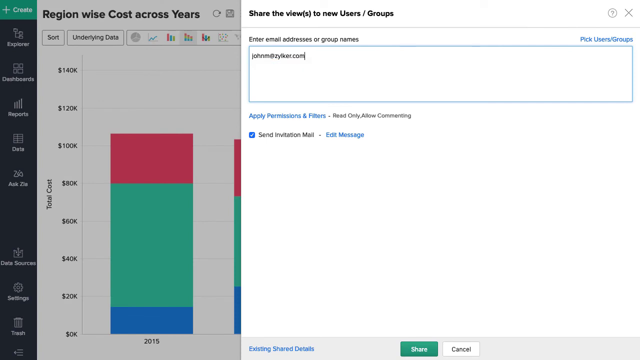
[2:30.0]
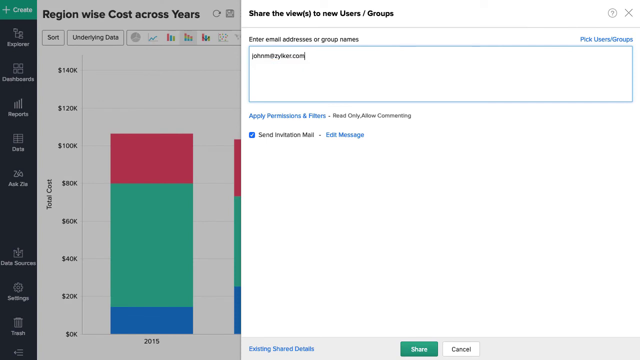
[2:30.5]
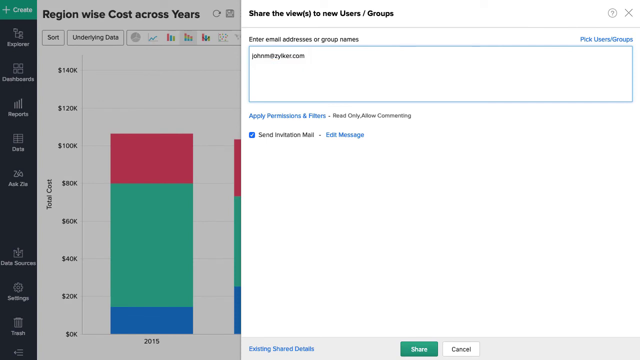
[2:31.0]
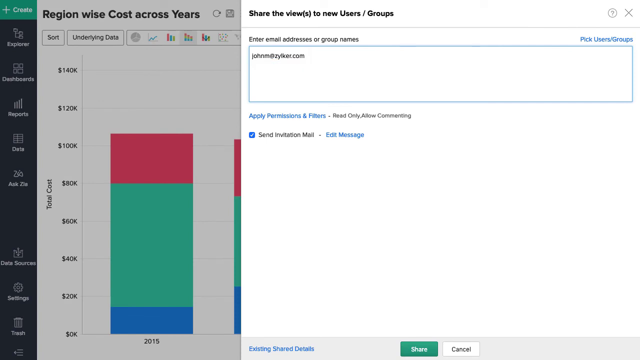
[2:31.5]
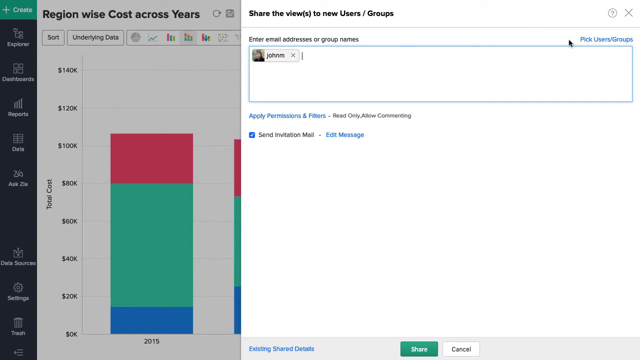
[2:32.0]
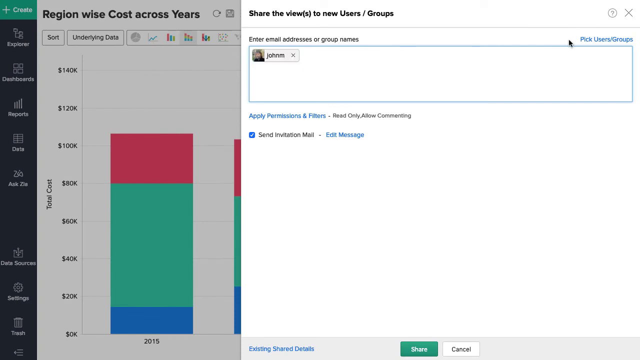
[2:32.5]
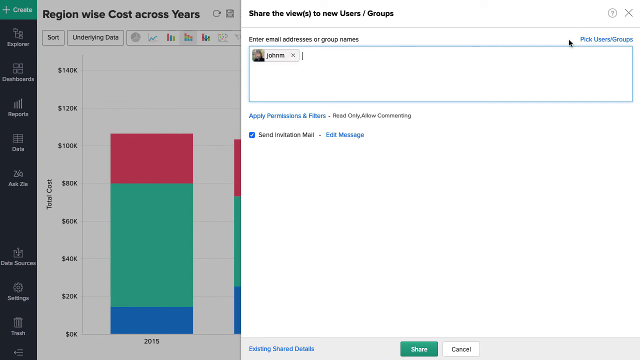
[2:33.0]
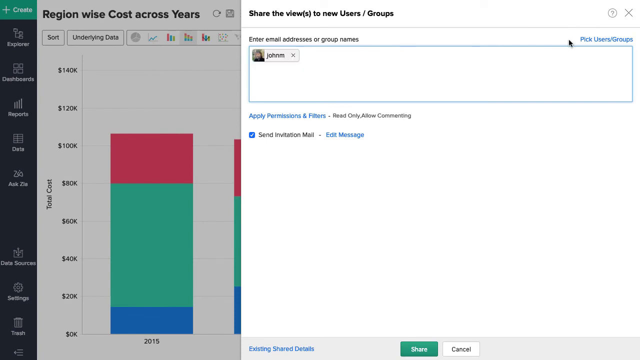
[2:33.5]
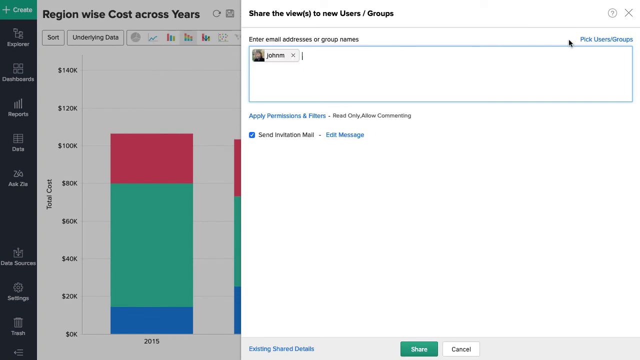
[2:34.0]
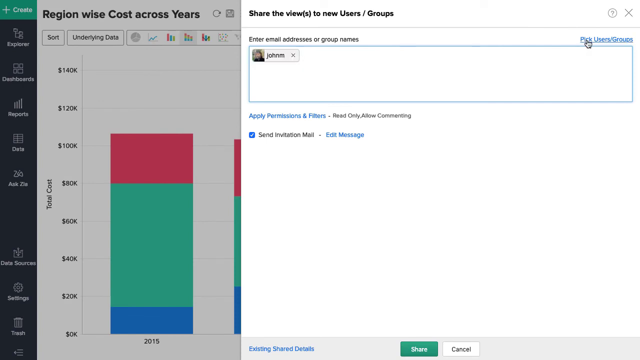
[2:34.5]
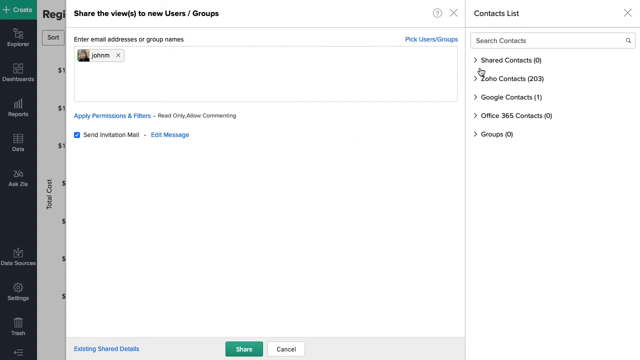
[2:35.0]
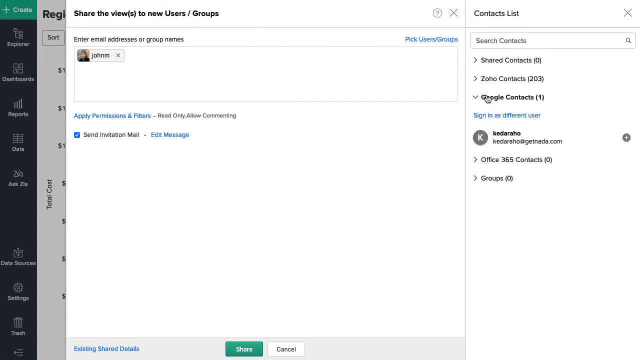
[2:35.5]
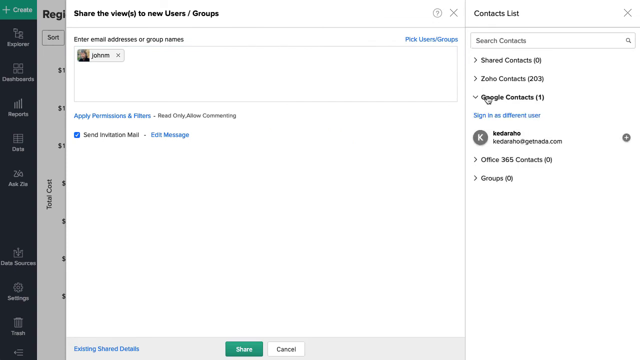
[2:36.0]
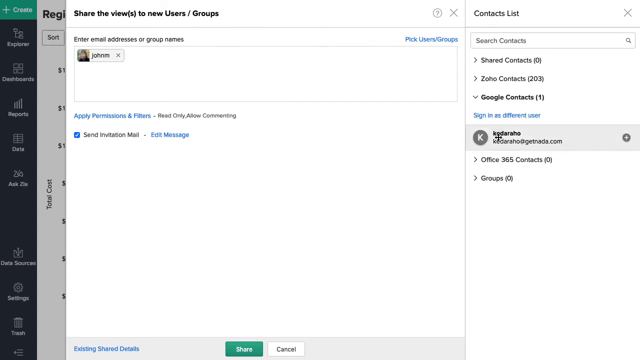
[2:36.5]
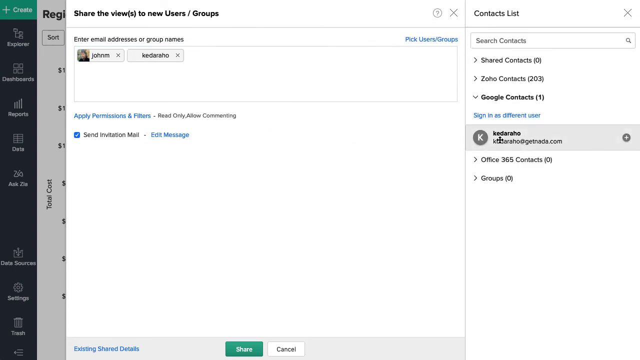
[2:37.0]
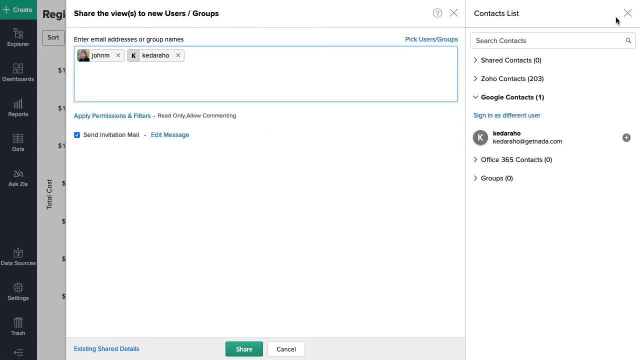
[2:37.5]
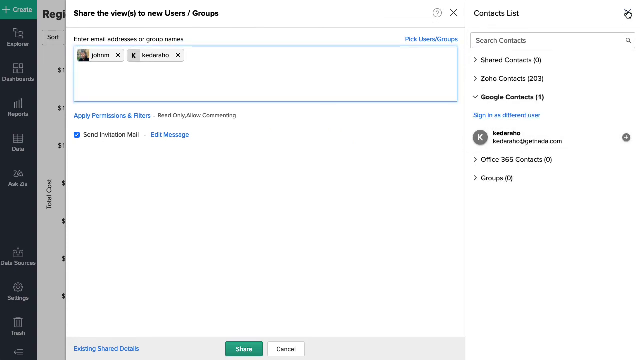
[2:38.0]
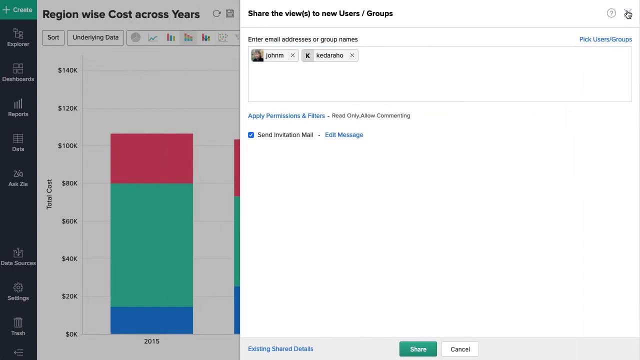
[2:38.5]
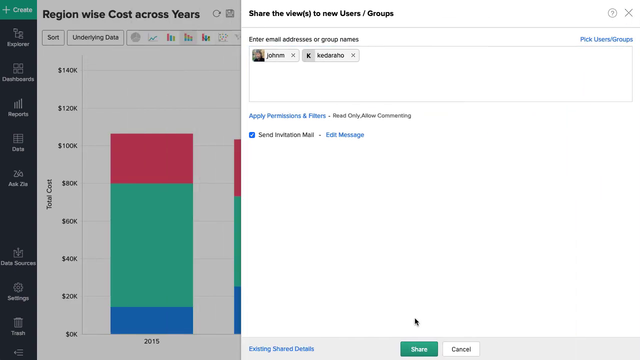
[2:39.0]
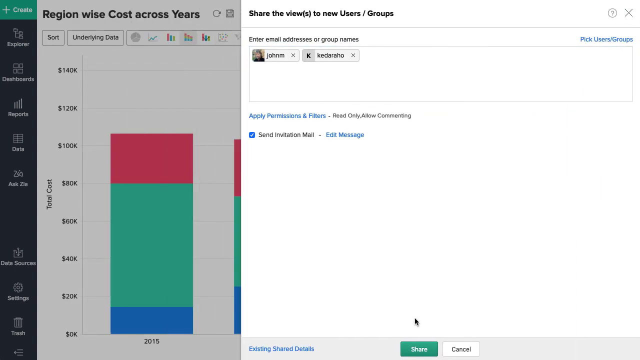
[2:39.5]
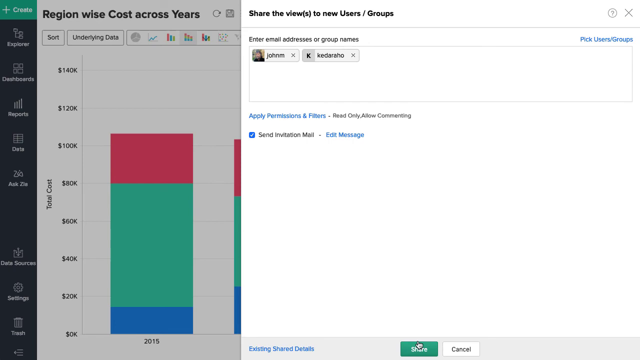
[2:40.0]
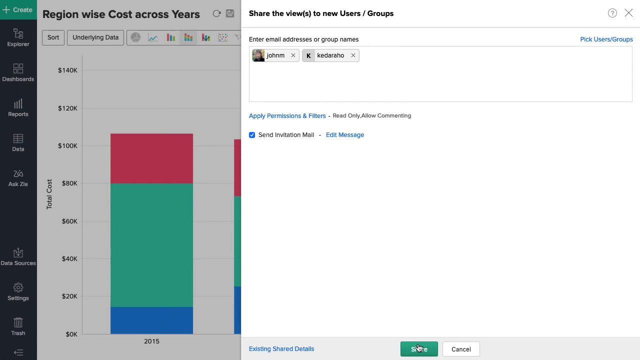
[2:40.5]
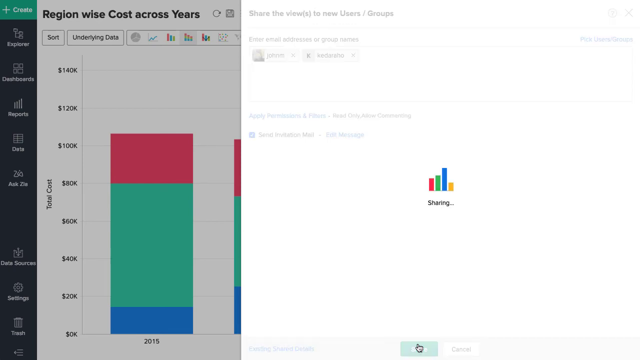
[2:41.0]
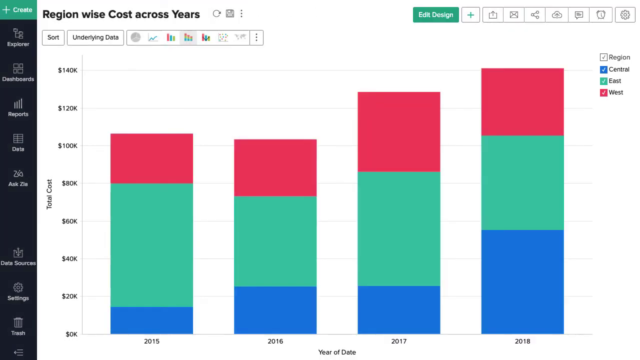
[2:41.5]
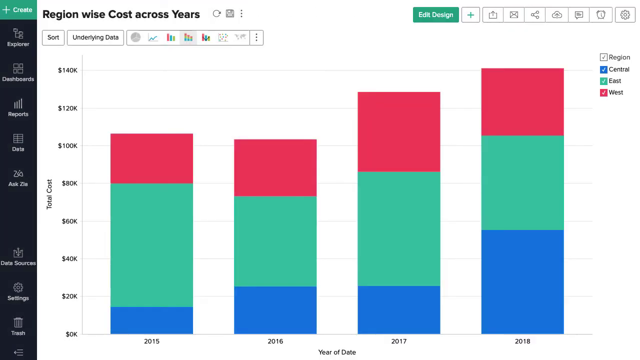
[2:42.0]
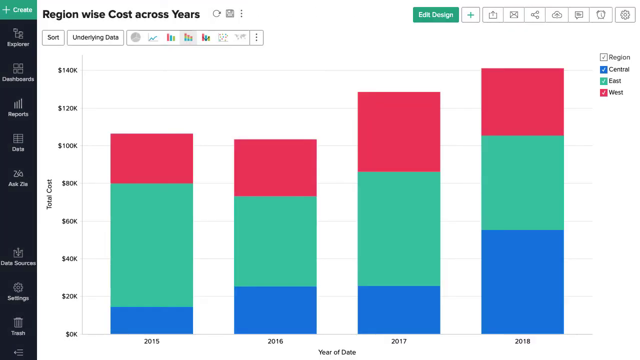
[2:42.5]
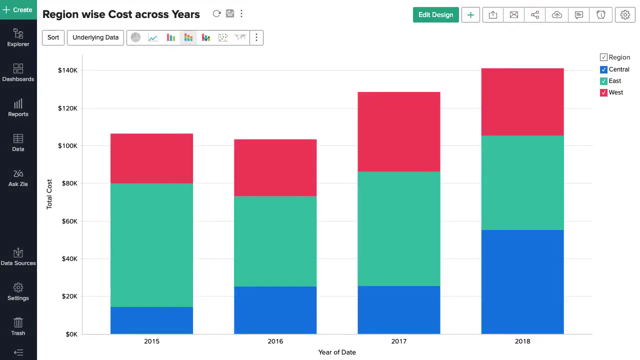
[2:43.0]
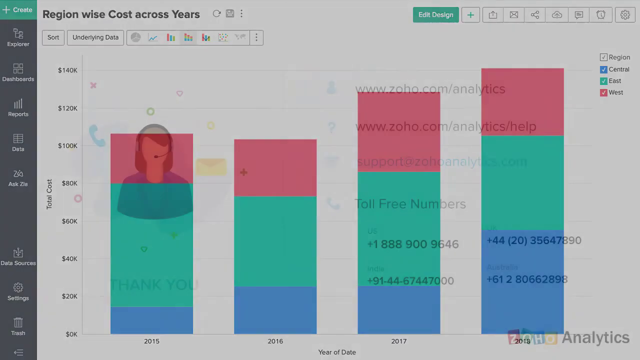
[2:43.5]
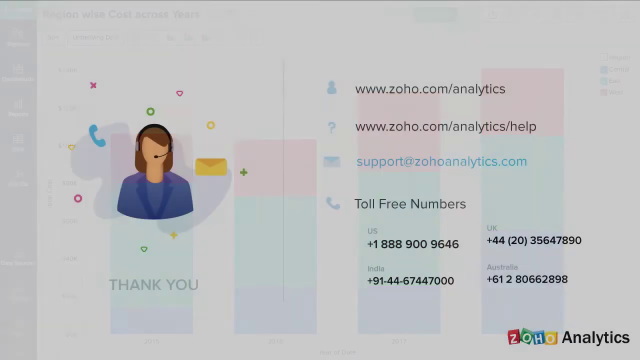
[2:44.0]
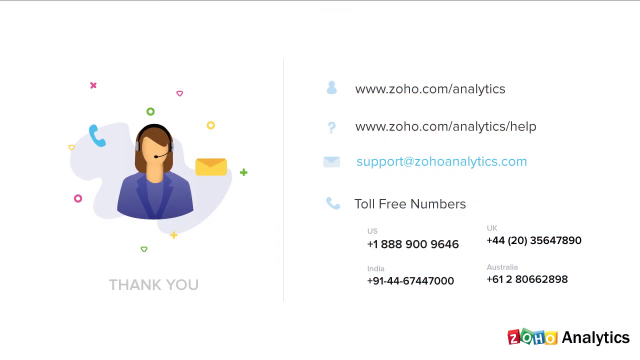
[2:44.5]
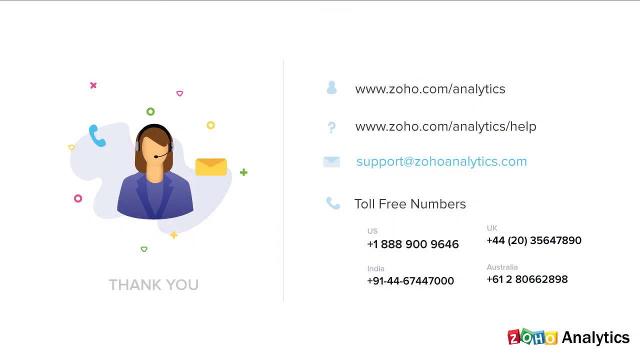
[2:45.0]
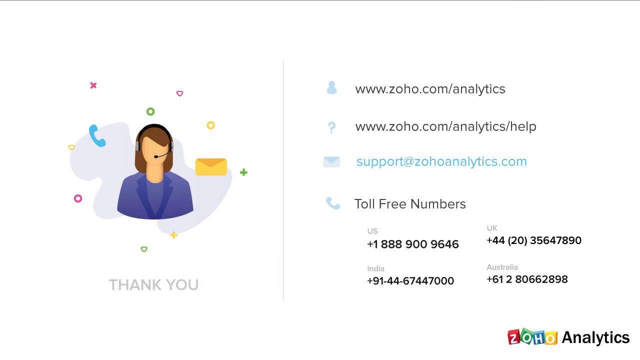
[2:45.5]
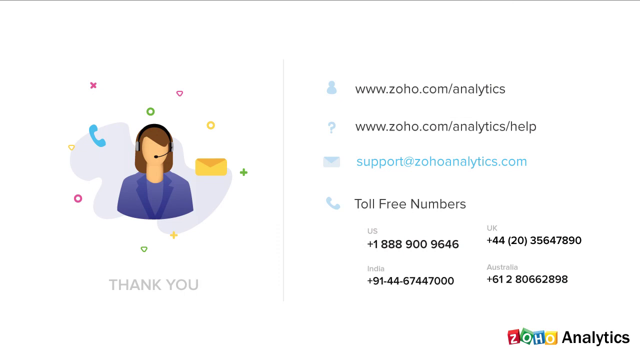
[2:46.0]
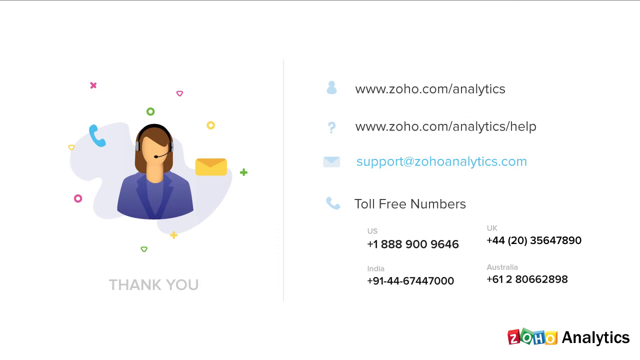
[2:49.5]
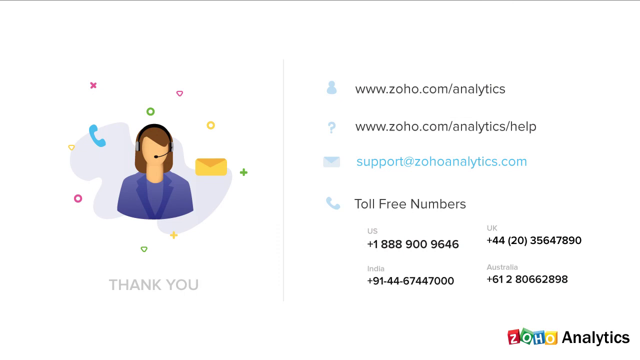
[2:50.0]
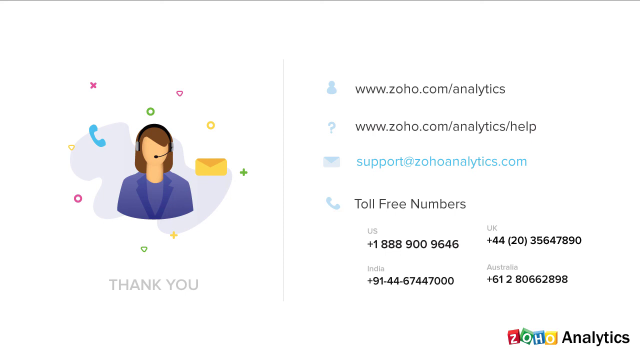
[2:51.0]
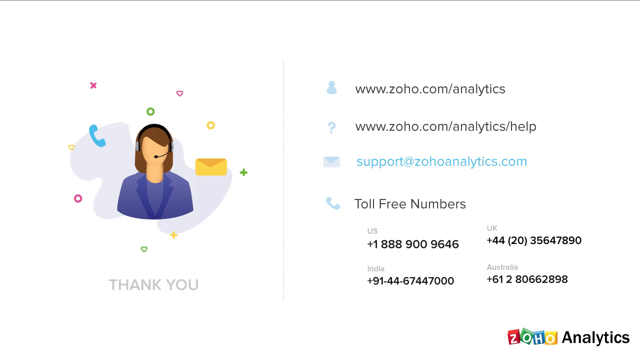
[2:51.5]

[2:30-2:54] A screen reads "share the views to new users / groups" at the top in black text, with a box that says "enter email addresses or group names". The person types an email address, and it changes into a box with a person's name and what looks like a small photograph of that person, a small rectangle in the box. They then click Google Contacts on the right and click a user, adding that contact to the box. They click save or share, and a loading box appears that says "sharing". At the end of the video, on a white background, is an illustration of a woman wearing a headset in a purple suit, with a blue telephone icon to the left and a yellow envelope icon to the right, small glitter or sparkle icons surrounding her, and "thank you" underneath in gray letters. On the right is contact information for Zoho Analytics: the website and support email address in blue, with the rest of the text in black, and four toll-free numbers for the US, the UK, India and Australia. In the bottom right corner is another Zoho Analytics logo, with "Zoho" in colored blocks and "analytics" in plain black text.